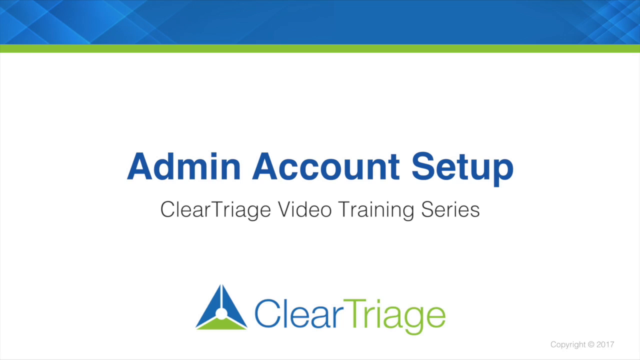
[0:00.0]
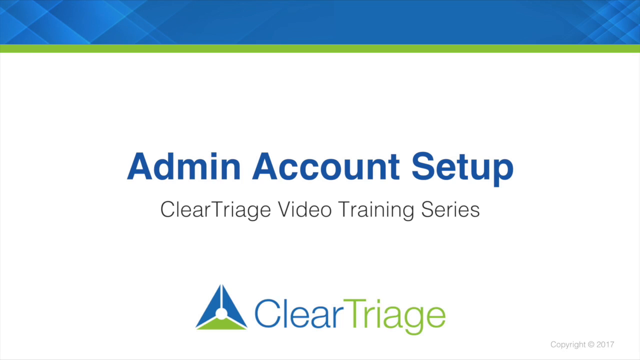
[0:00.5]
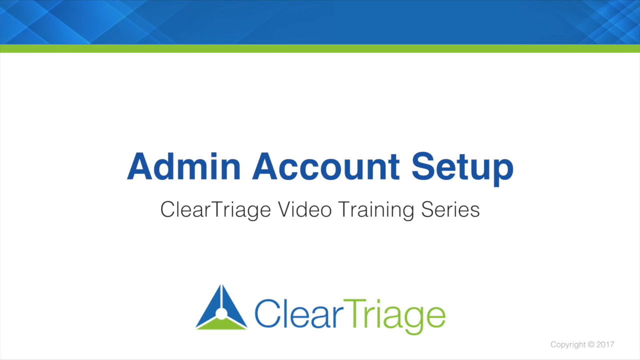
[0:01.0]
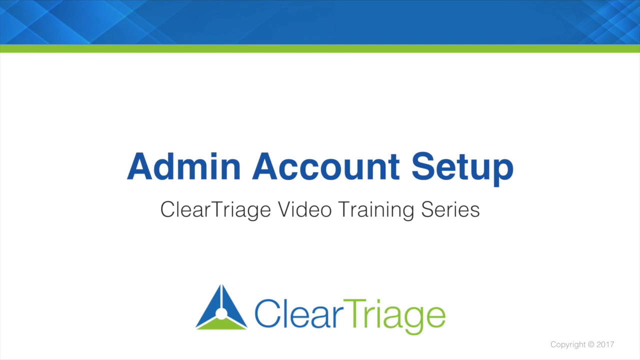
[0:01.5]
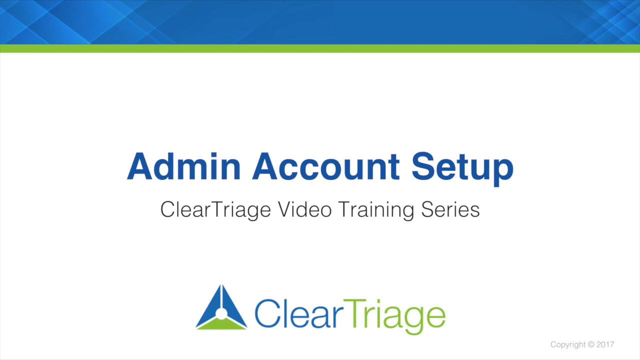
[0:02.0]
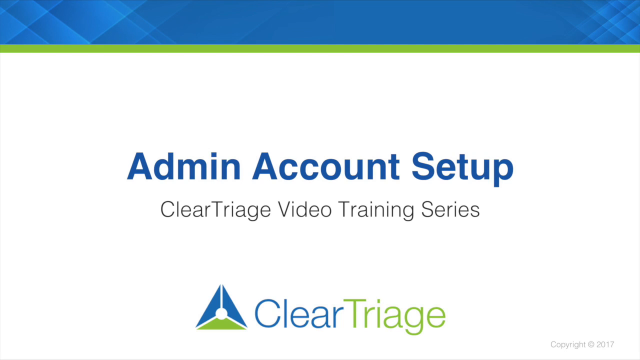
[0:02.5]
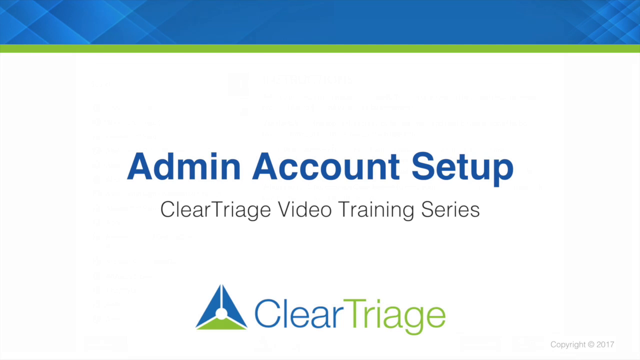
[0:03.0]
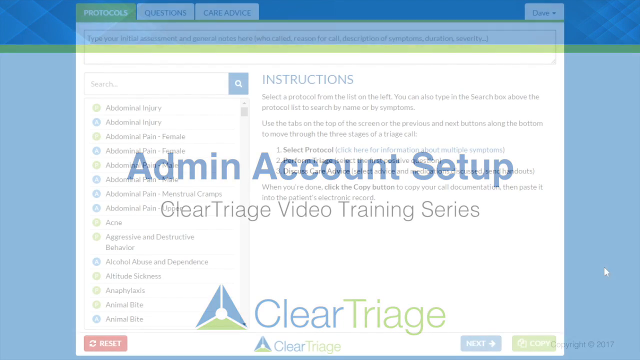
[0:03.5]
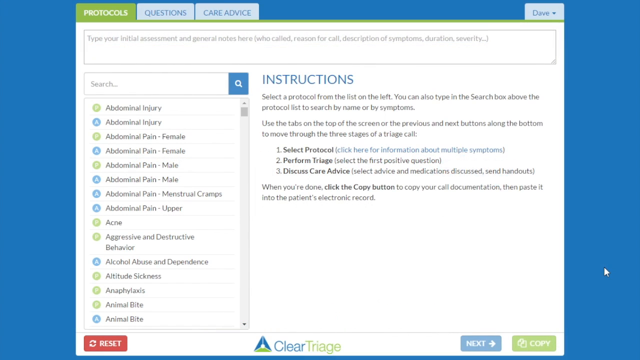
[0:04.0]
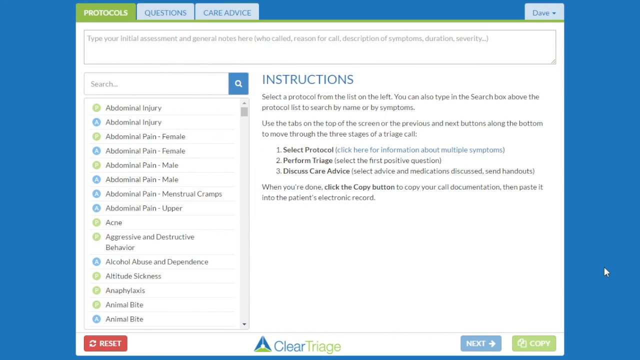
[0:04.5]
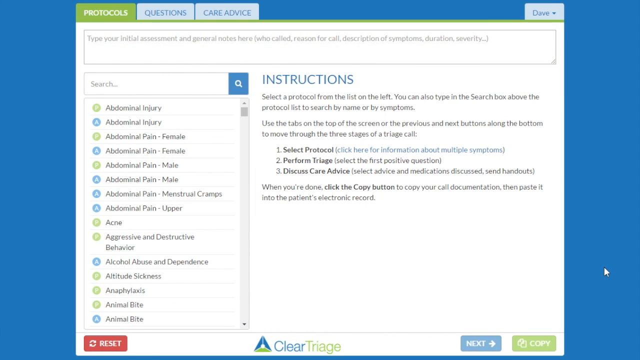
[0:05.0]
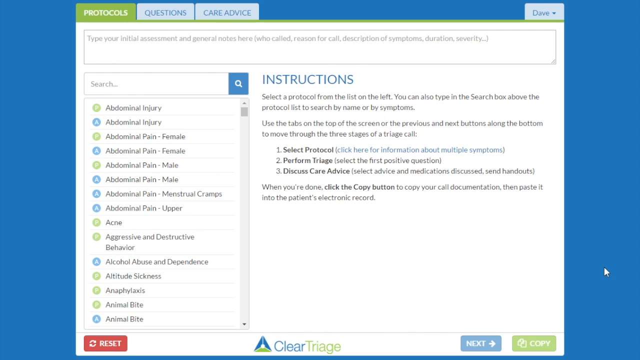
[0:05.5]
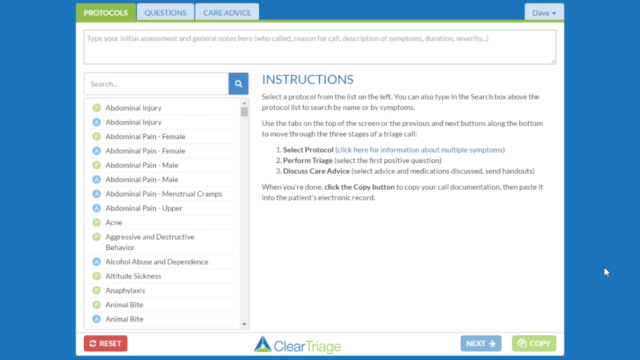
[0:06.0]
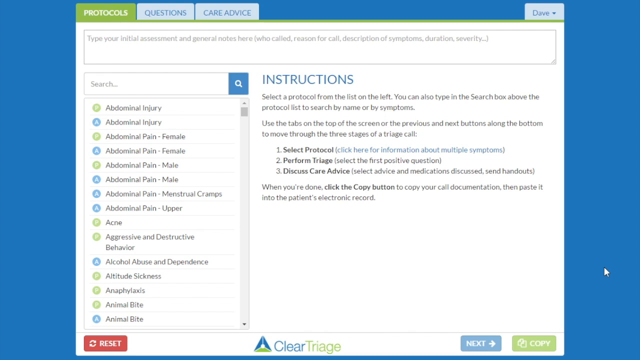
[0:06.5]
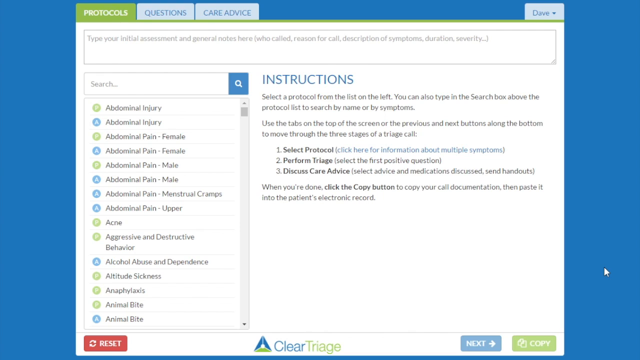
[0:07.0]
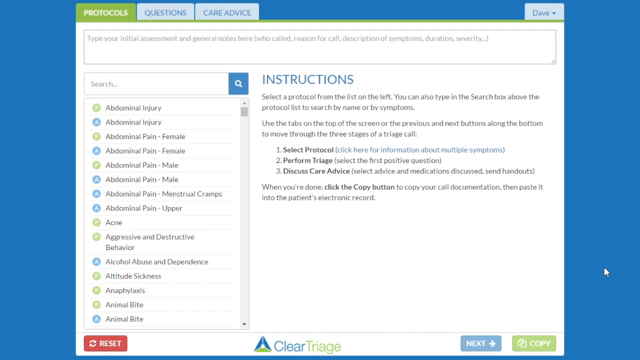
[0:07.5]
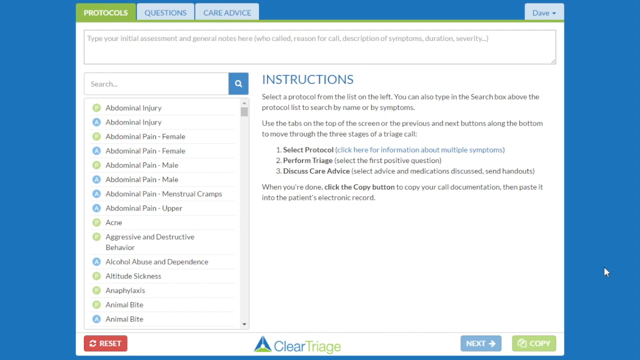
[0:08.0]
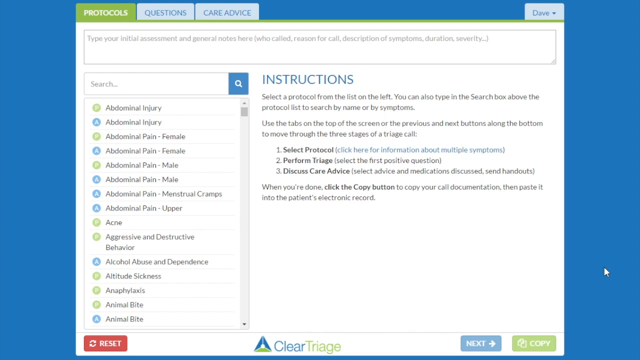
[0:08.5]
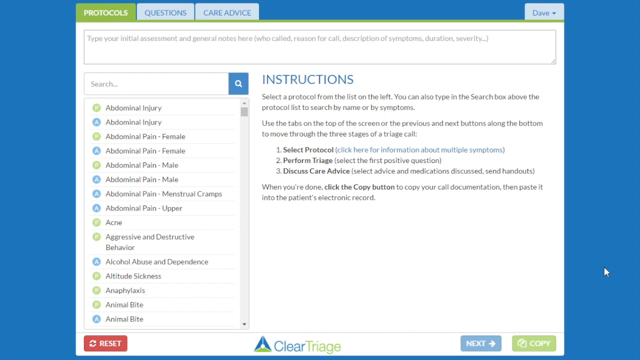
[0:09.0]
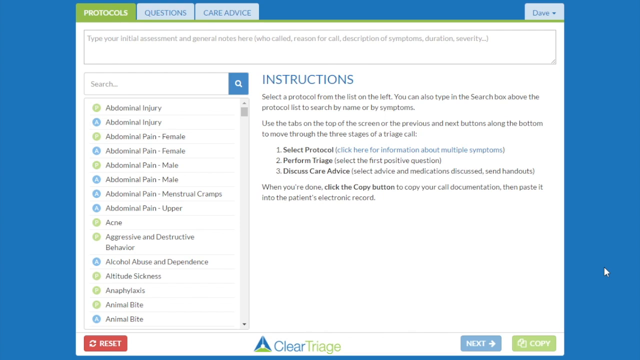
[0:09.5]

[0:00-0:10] The video opens with a title page in blue letters reading "Admin Account Setup Clear Triage Video Training Series", along with a triangle logo made of two triangles at the top and a green triangle at the bottom, labeled "Clear Triage". The video then moves to a screen with four tabs at the top: a green "Protocols" tab marking the current page, a "Questions" tab, a "Care Advice" tab, and a fourth tab on the right-hand side reading "Dave". The Protocols page reads "type your initial assessment and general notes here who called, reasons called, description of symptoms, duration, severity". There is a drop-down list of conditions, including abdominal injury, abdominal pain for male and female, menstrual cycle, and abdominal pain upper; it appears to be alphabetical and continues with acne and aggressive and destructive behaviour. Instructions read "select a protocol from the list on the left you can then type in the search box above the protocol list to search by name or by symptom". They also say to use the tabs at the top and the next buttons along the bottom: select the protocol, perform triage, discuss care advice, and then click the copy button.